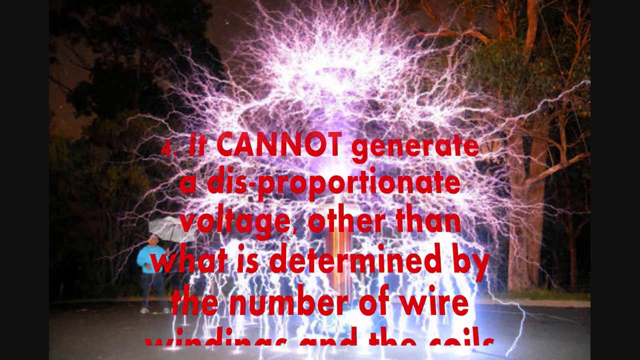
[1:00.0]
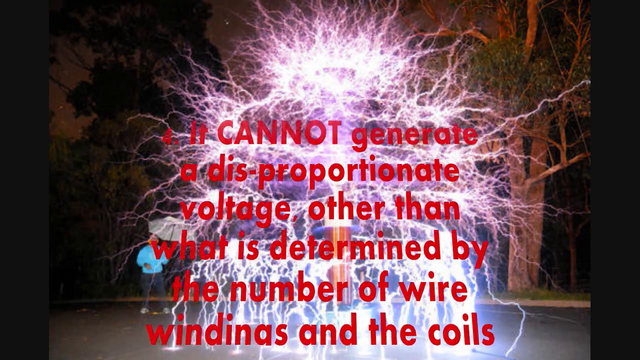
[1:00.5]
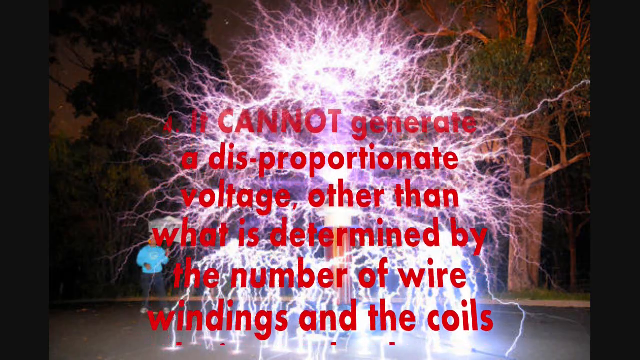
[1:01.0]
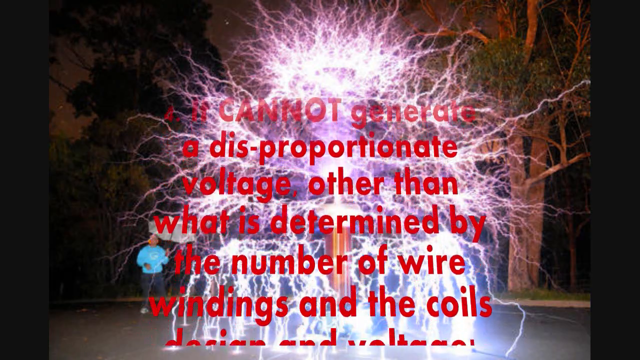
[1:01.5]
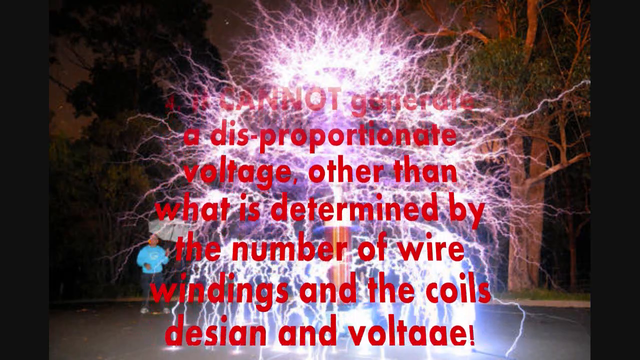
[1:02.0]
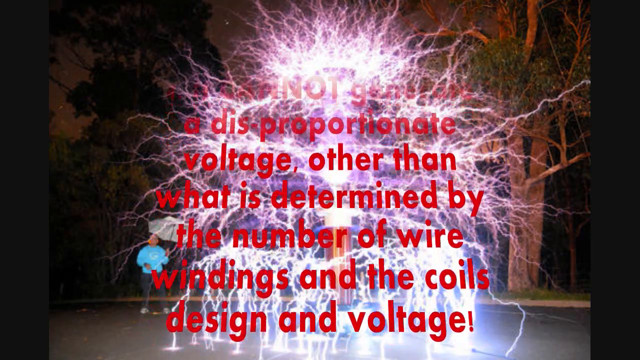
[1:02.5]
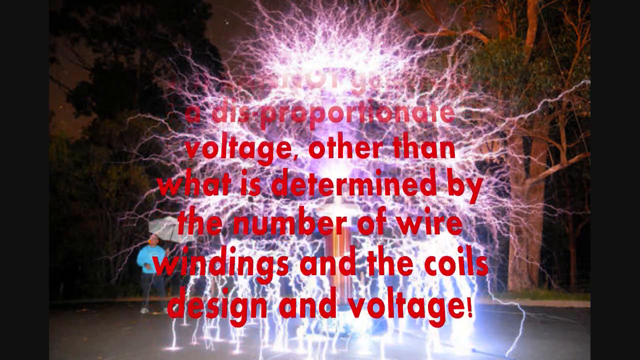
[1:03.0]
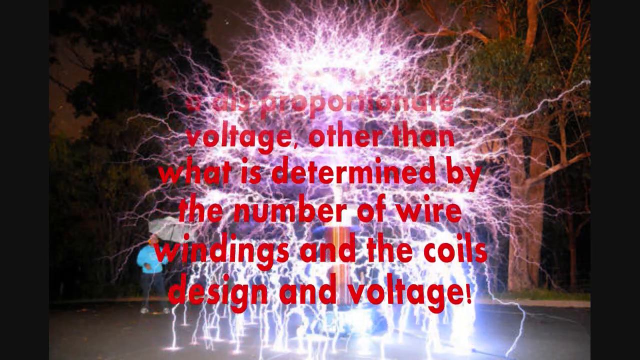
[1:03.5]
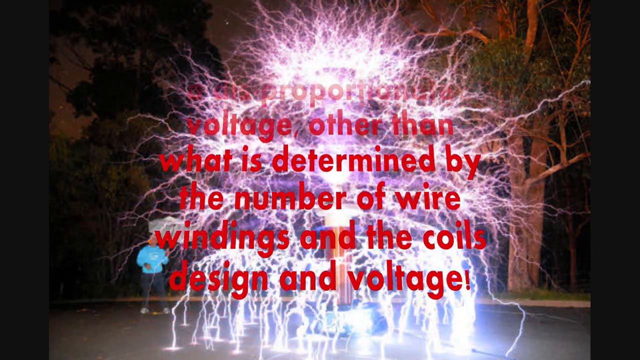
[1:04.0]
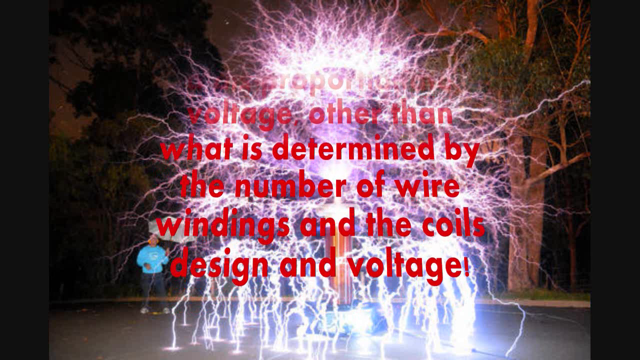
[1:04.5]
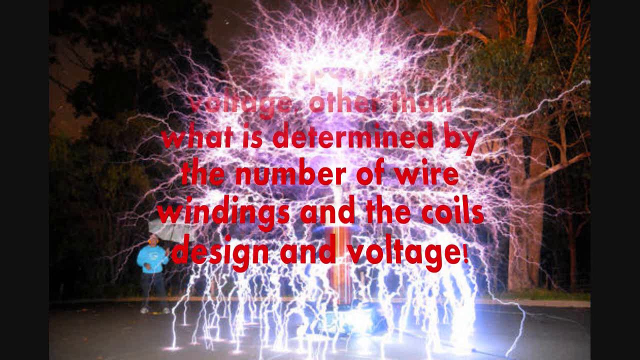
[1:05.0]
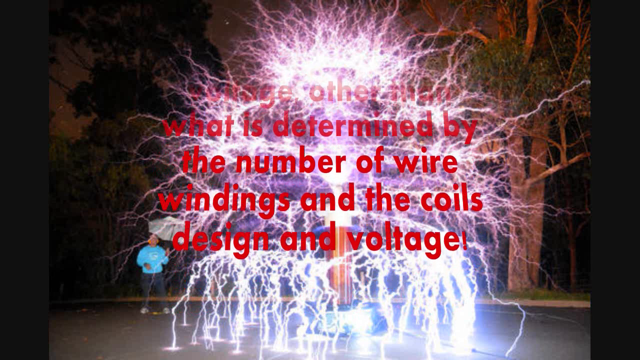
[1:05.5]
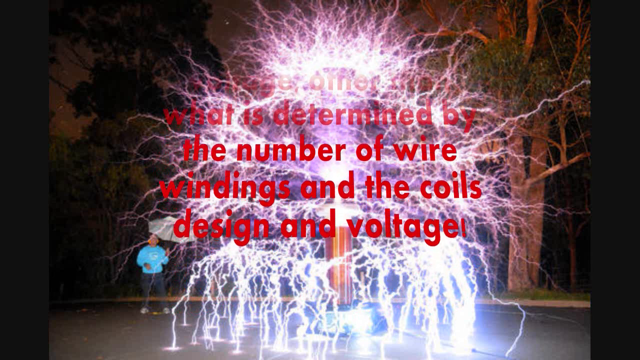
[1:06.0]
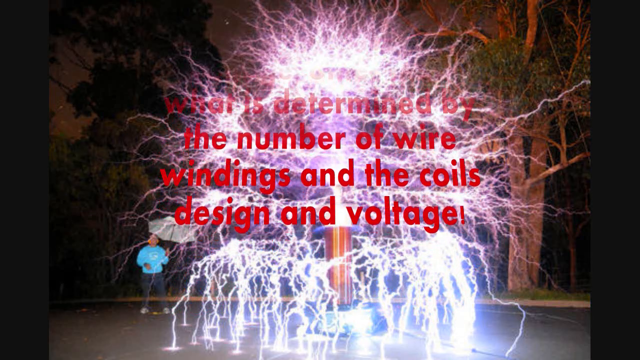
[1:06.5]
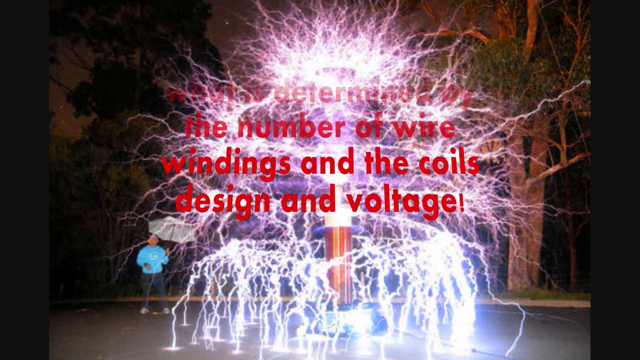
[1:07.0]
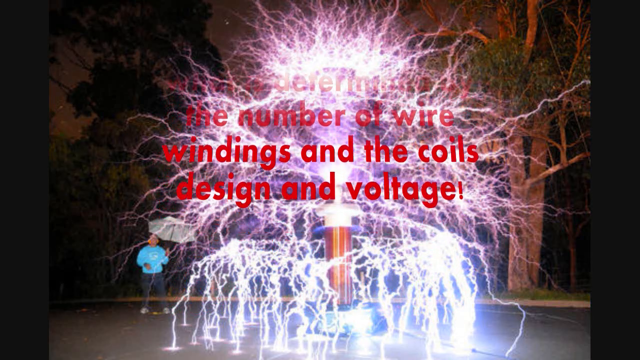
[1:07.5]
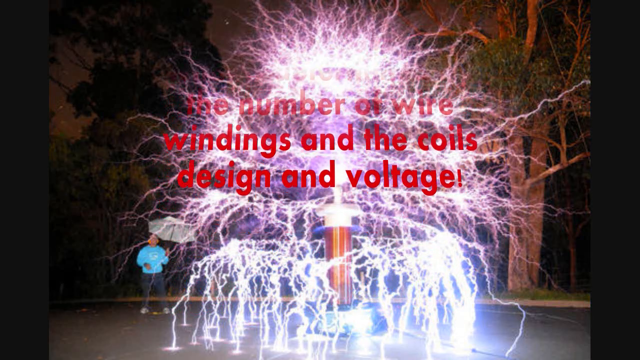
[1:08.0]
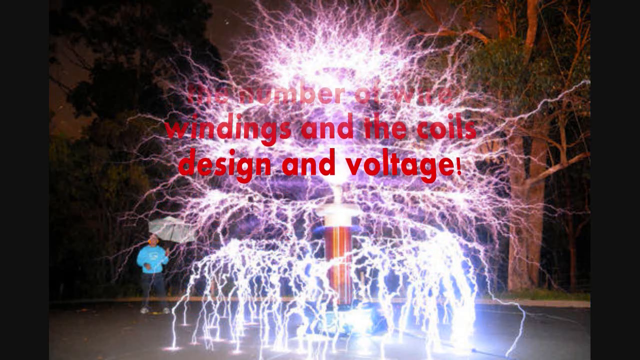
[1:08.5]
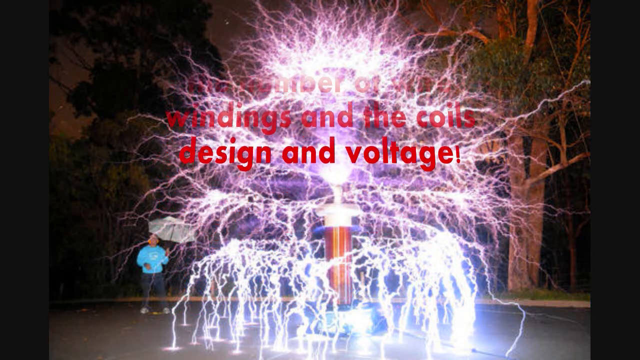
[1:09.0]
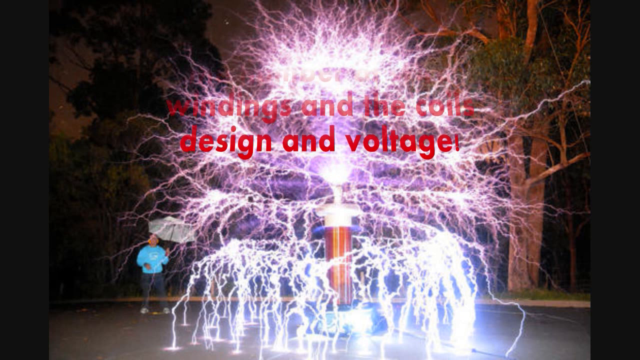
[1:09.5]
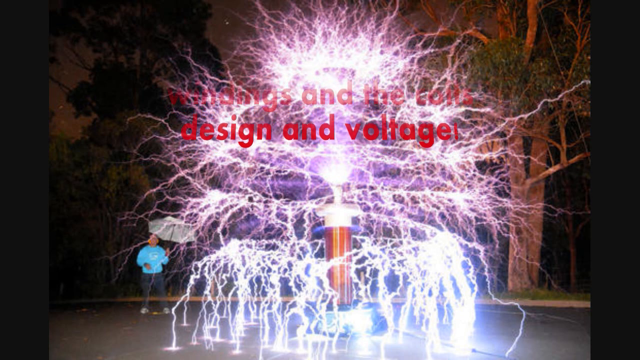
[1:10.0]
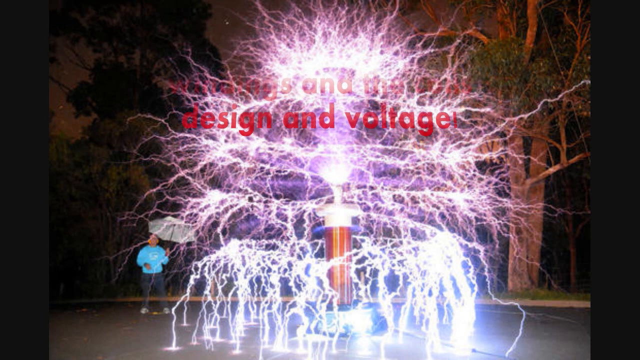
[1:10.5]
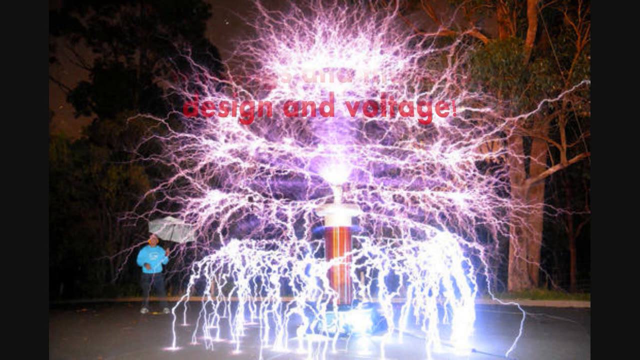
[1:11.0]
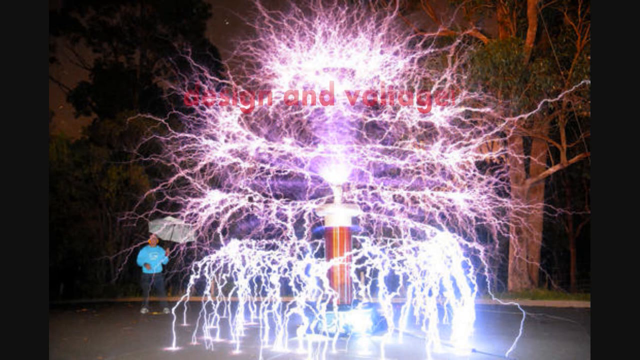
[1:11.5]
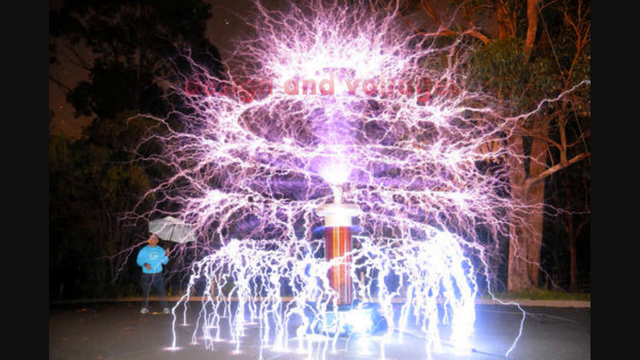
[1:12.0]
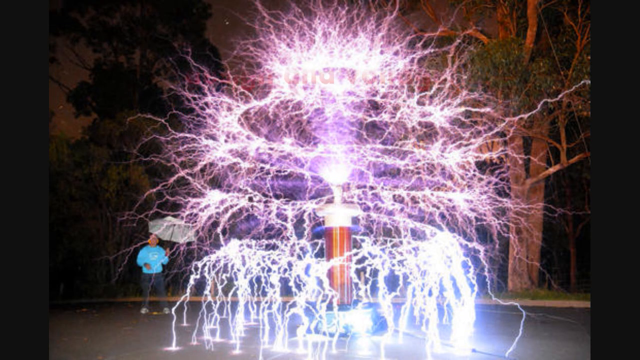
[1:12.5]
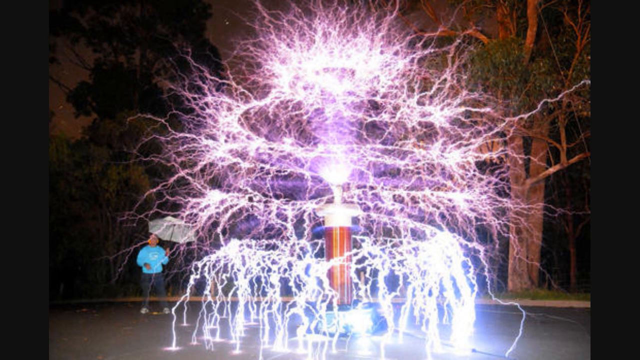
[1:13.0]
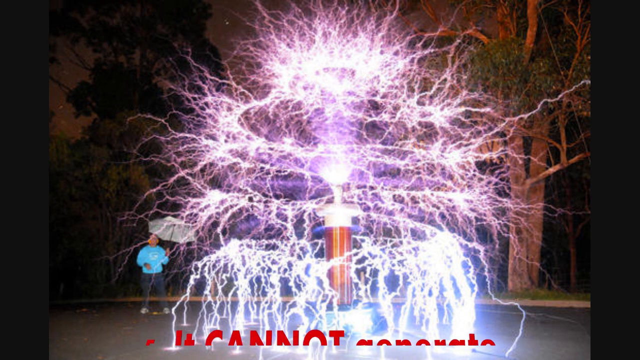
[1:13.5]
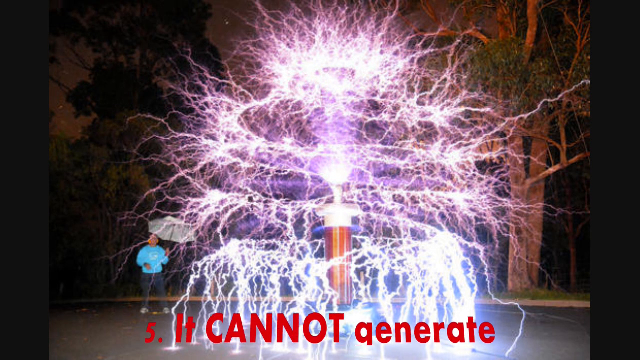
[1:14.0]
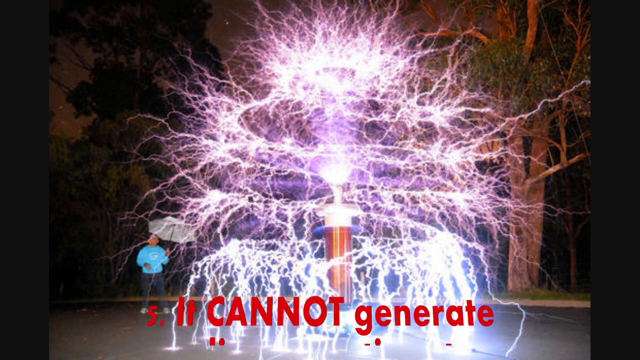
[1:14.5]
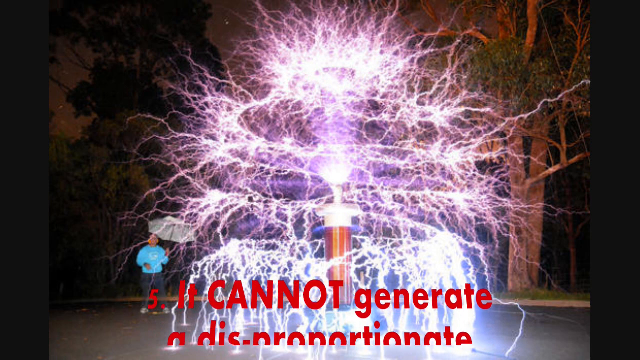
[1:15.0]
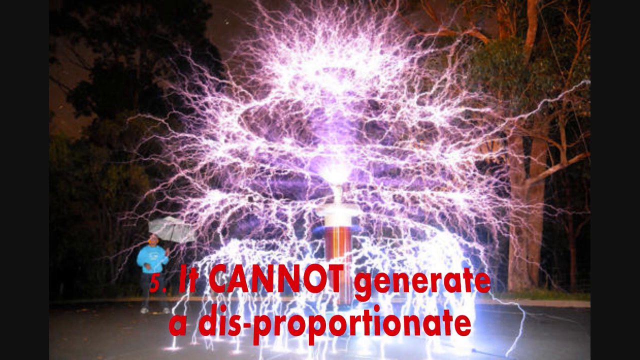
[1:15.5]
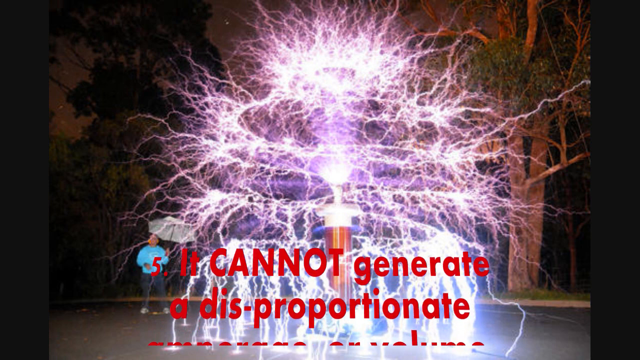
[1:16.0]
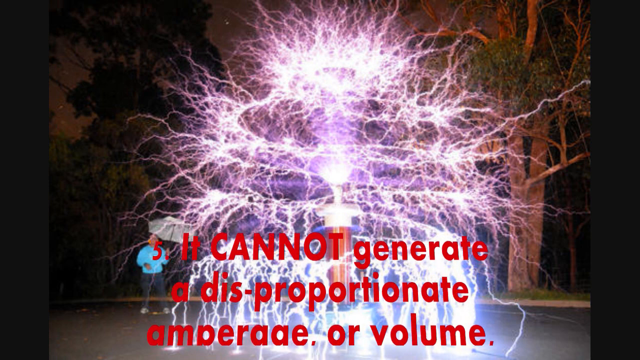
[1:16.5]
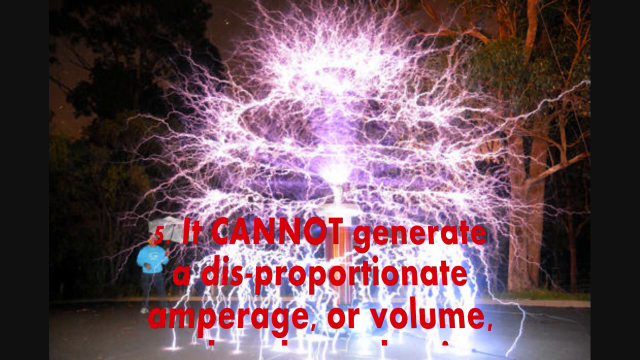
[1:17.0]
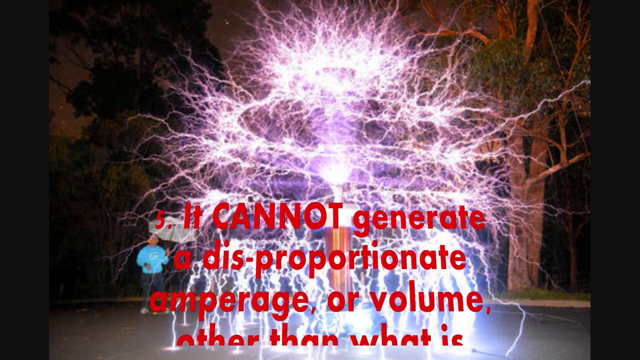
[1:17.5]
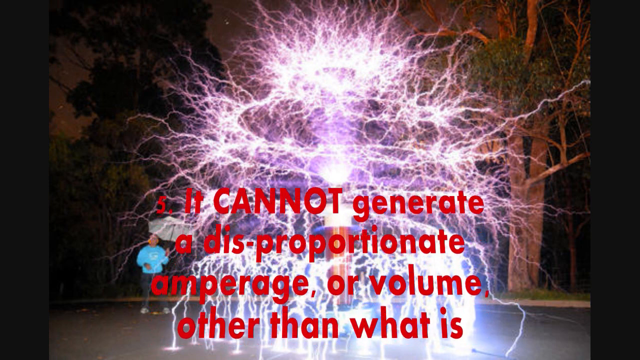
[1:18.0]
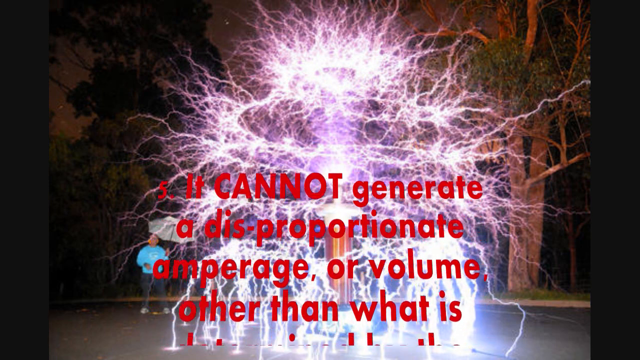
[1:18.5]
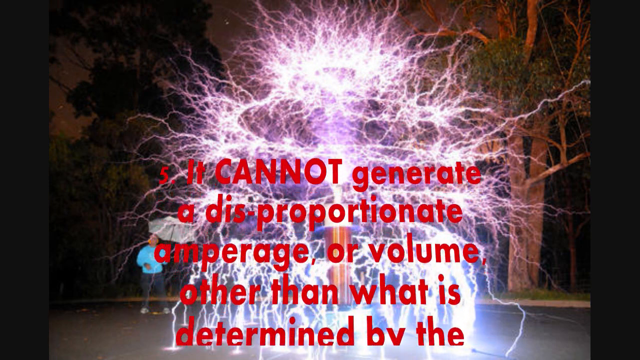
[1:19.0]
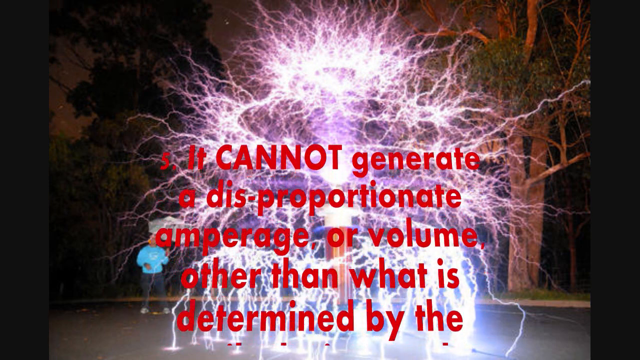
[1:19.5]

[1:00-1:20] Text continues to be shown over the image. The man, wearing a sky blue sweatshirt, watches from a safe distance. Part of the text says "it cannot generate a disproportionate amperage" ... "other than what is determined by the coil's design", and it also states "it cannot generate a disproportionate voltage other than what is determined by the number of wire windings and the coil's design". The same image of the Tesla coil remains on screen: it is operating at night and generating what appears to be hundreds of small bolts of lightning, lighting up several trees standing in the background.